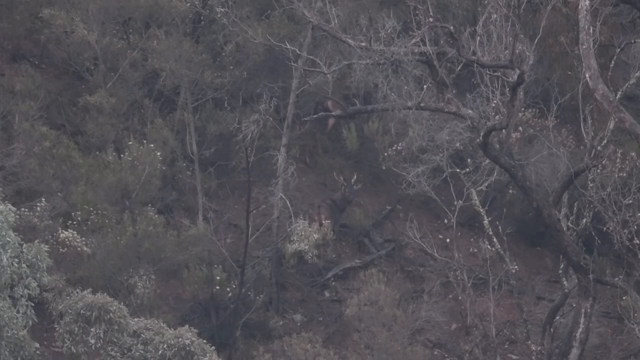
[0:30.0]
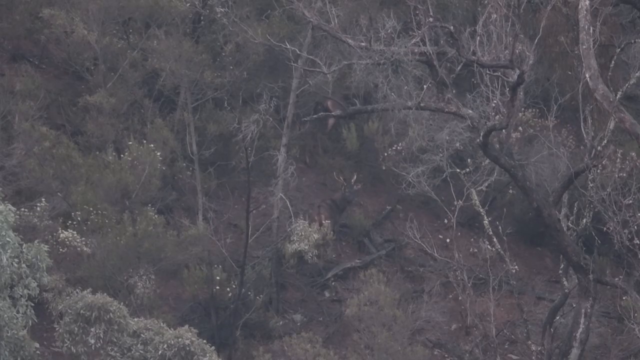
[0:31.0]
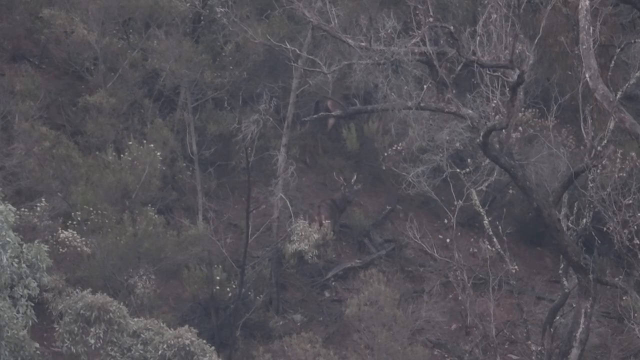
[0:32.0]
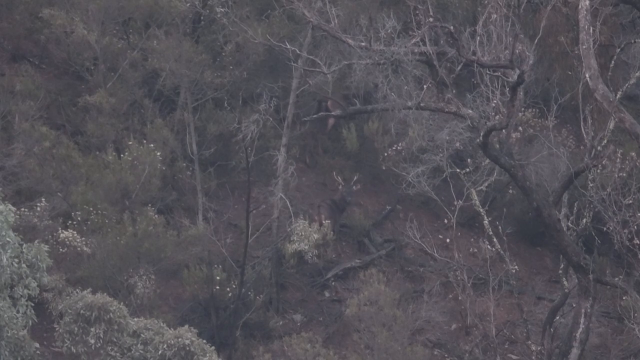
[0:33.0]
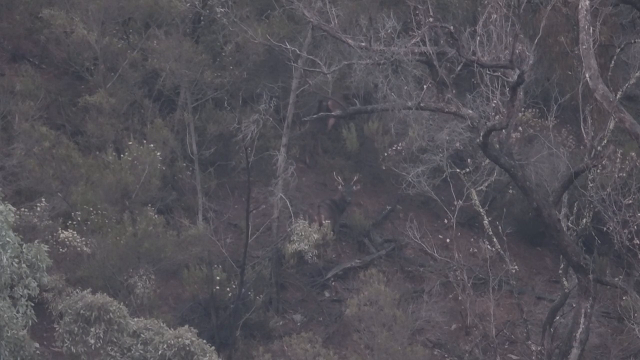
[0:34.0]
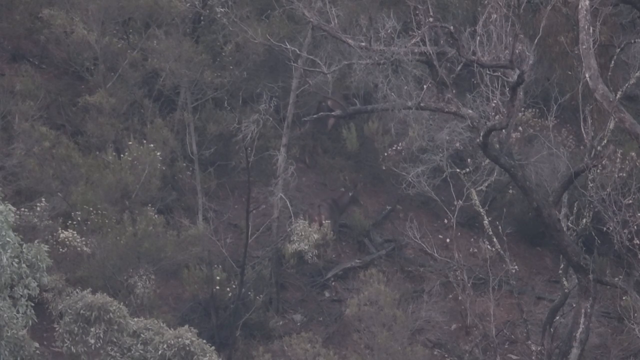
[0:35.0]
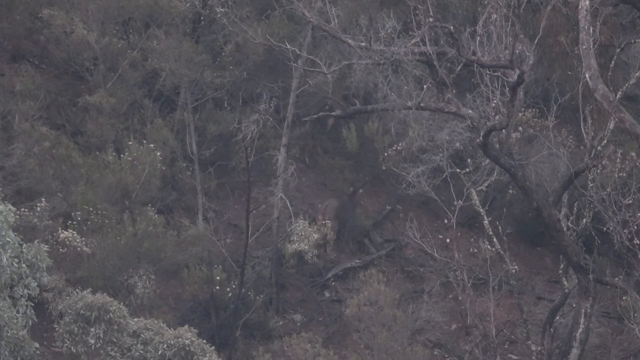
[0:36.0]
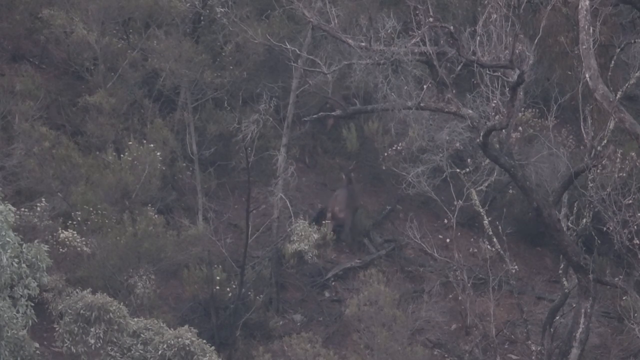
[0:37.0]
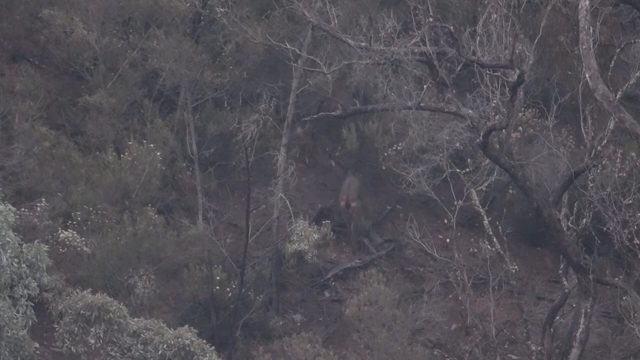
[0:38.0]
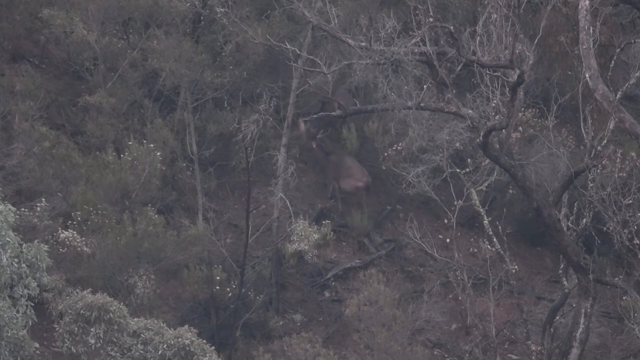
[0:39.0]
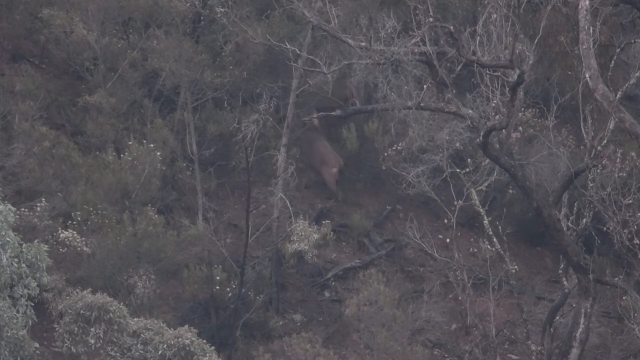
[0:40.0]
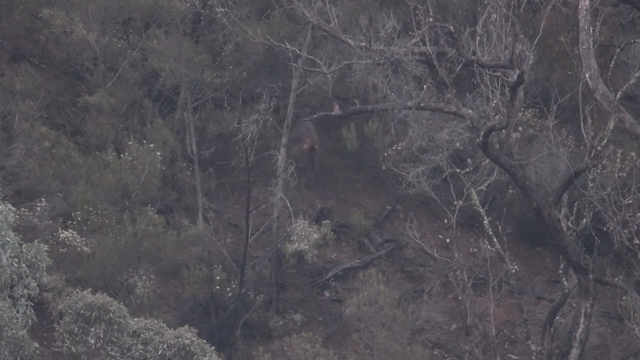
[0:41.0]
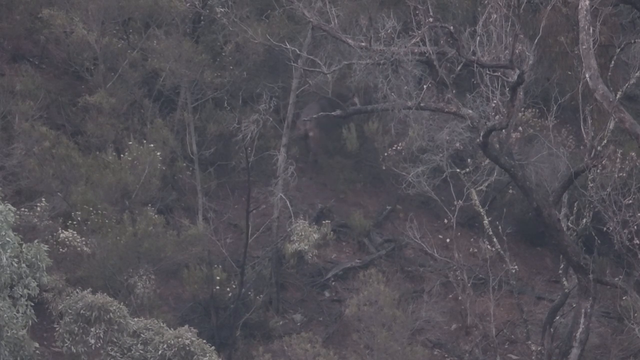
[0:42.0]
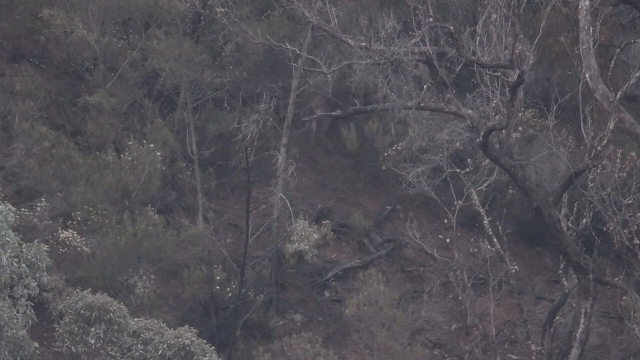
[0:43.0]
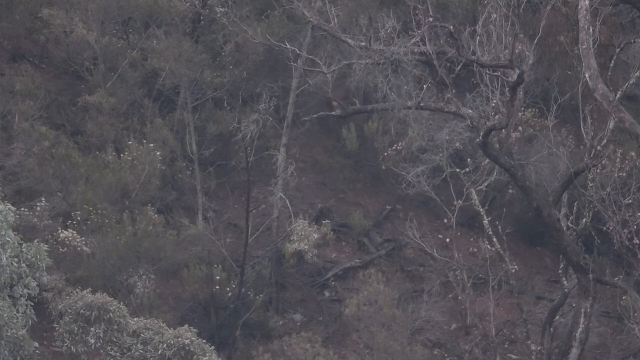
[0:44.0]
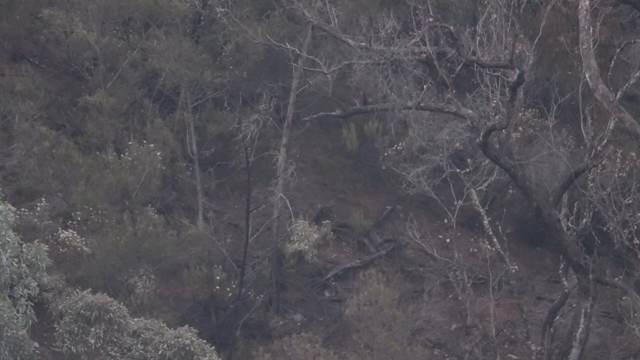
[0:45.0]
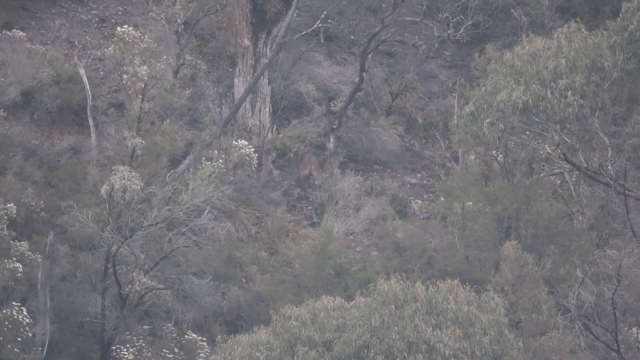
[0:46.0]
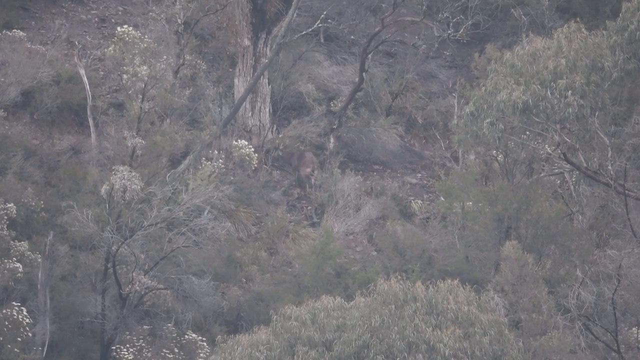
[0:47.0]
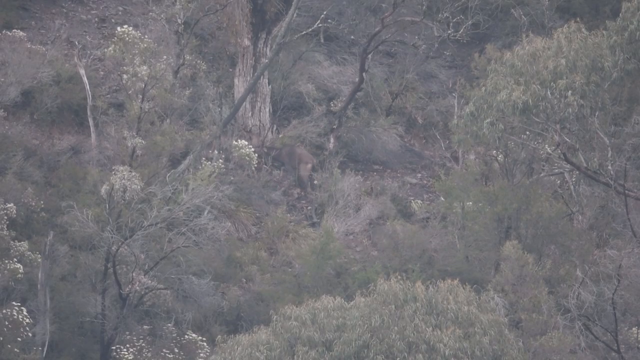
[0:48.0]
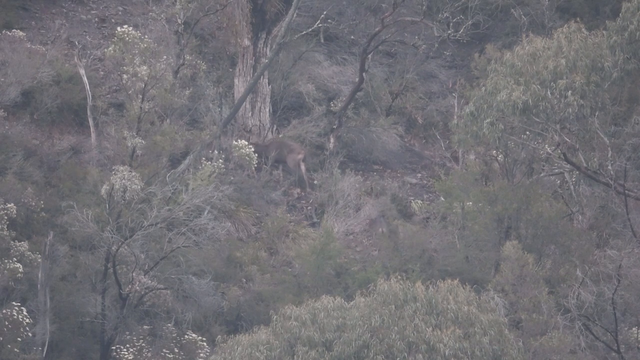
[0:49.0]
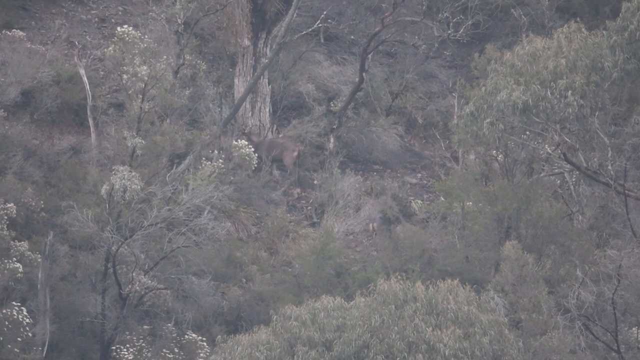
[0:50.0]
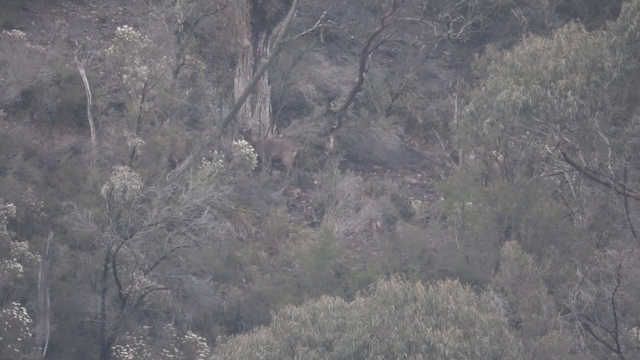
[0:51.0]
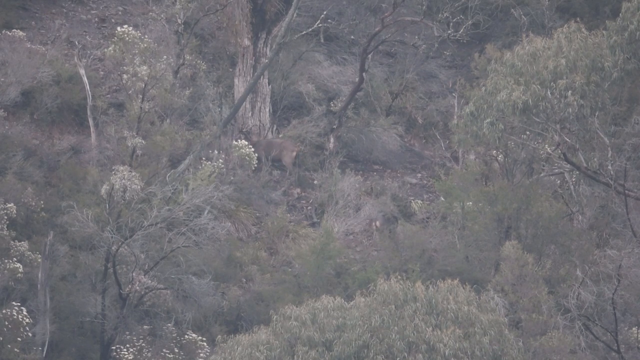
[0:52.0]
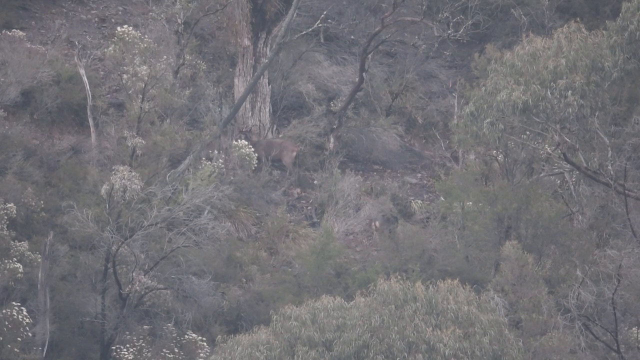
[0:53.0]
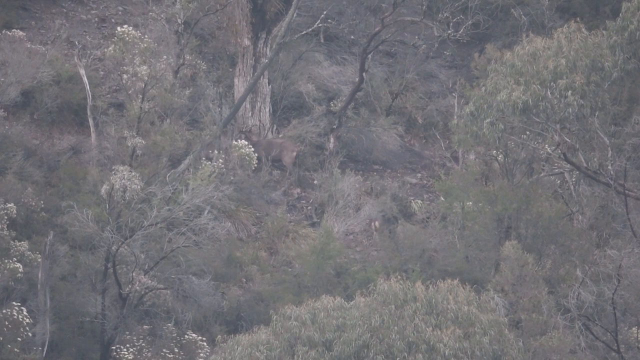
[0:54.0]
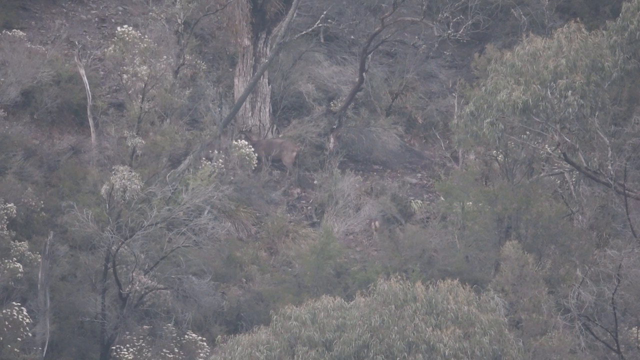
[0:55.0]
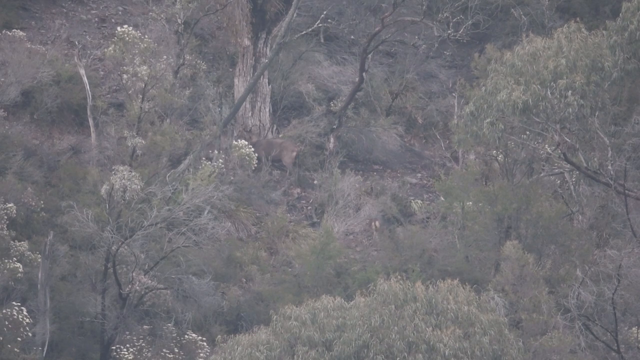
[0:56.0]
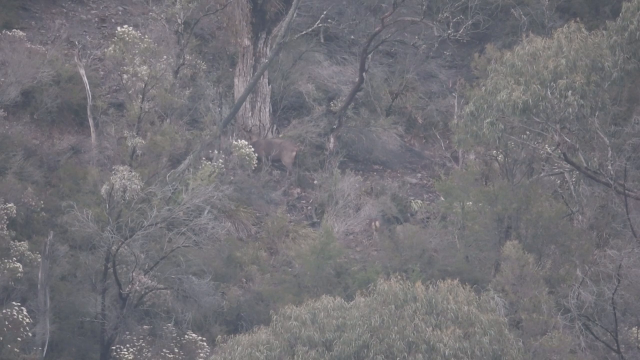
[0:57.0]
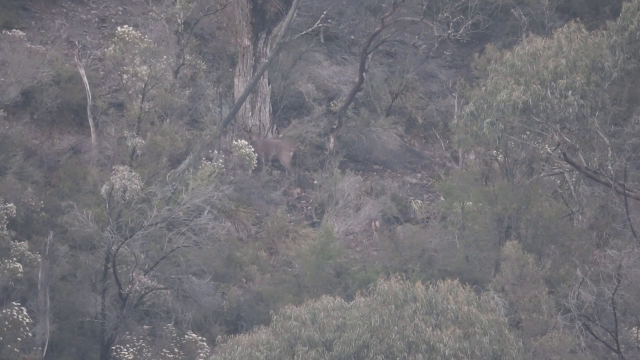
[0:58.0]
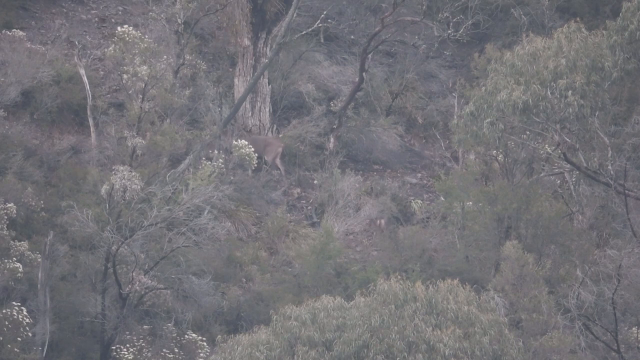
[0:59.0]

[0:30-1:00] An overhead shot looks down onto some trees and a wooded area where two deer are walking along. One of the deer has small antlers. There are not many leaves on the trees. The deer appears to turn around and look at the camera, turns its head back, and then begins to step slowly away from the camera, as does the deer in front, and they both move off towards the trees. There are in fact three deer walking off; one in the centre is quite small, smaller than the other two. They walk out of shot underneath the tree branches. A different view then shows the deer walking underneath the trees, the group near a rotten tree with rough bark on the side and a hole in the centre at the top. The group of deer appears to walk off from the centre towards the top left of the screen. The deer are quite difficult to see because they match the colour of the background, but when their tails swish the white fur on their rears is visible.